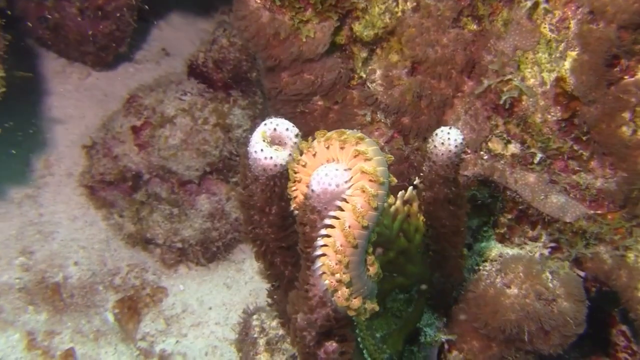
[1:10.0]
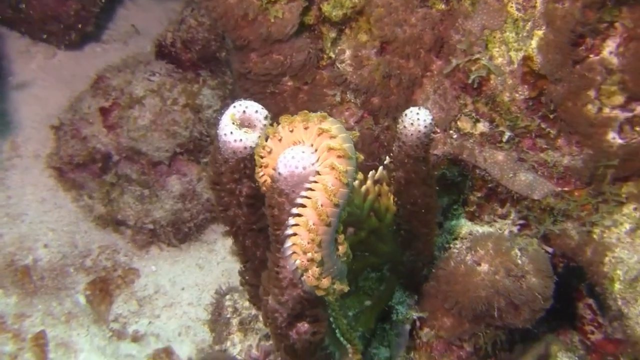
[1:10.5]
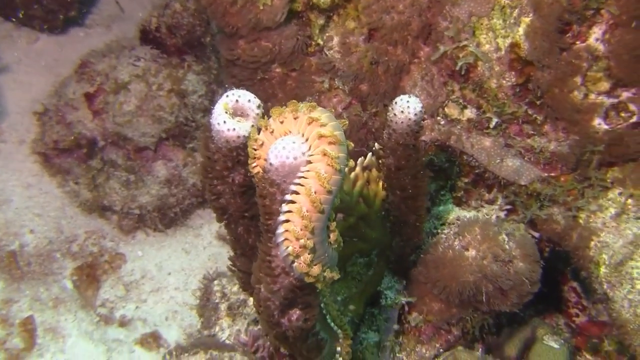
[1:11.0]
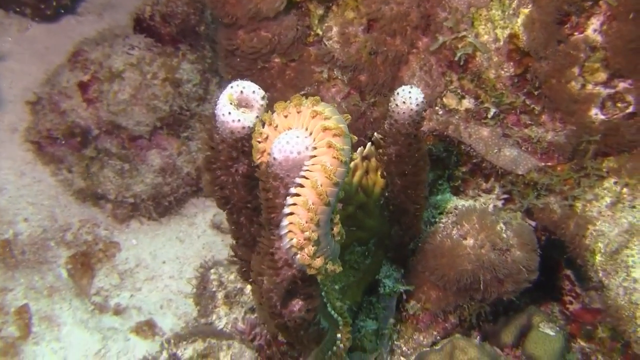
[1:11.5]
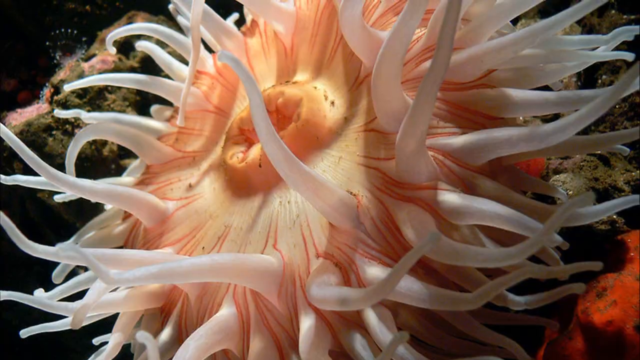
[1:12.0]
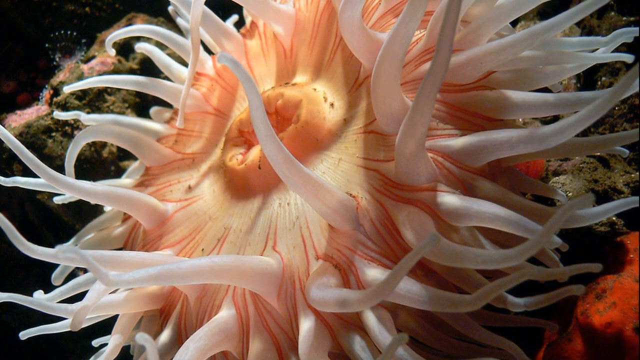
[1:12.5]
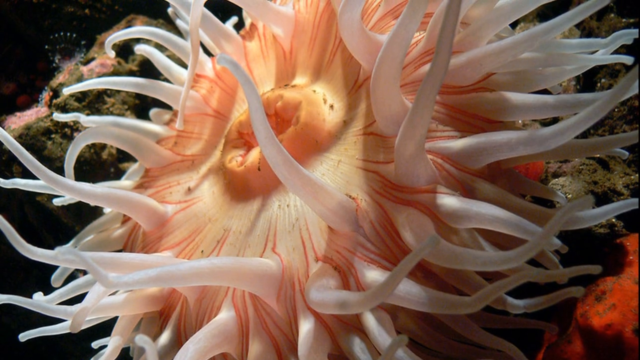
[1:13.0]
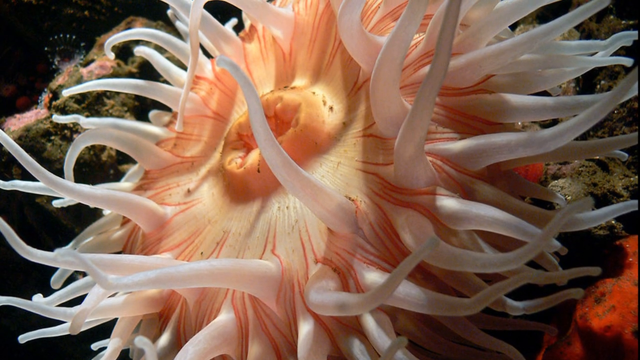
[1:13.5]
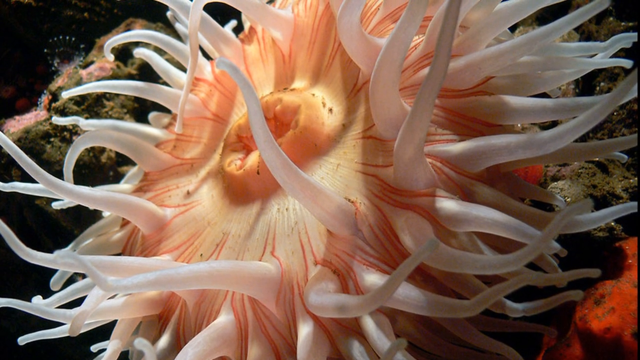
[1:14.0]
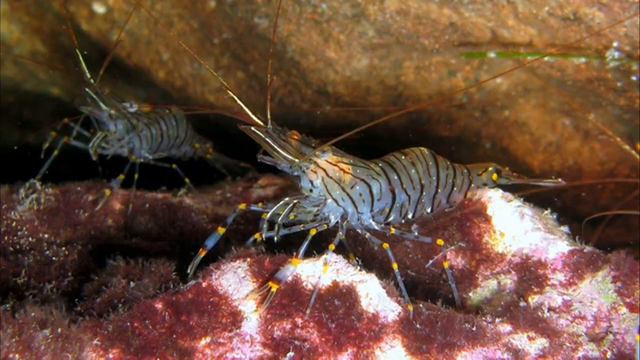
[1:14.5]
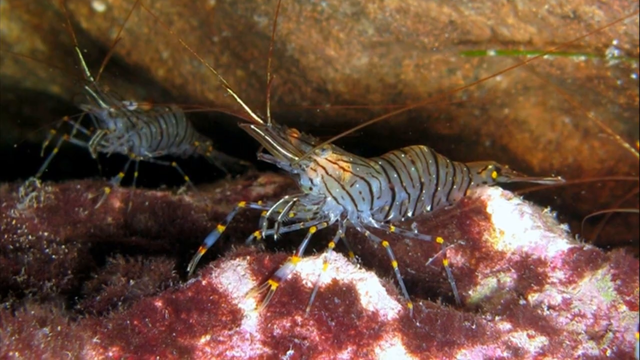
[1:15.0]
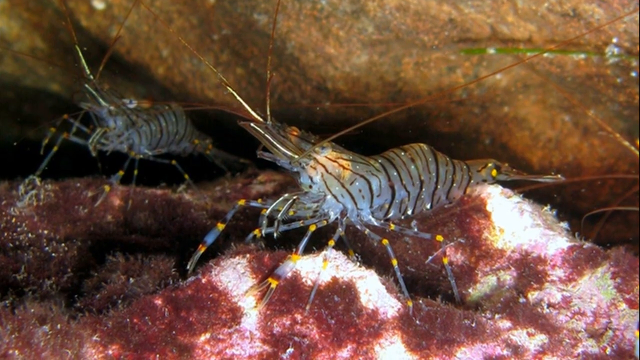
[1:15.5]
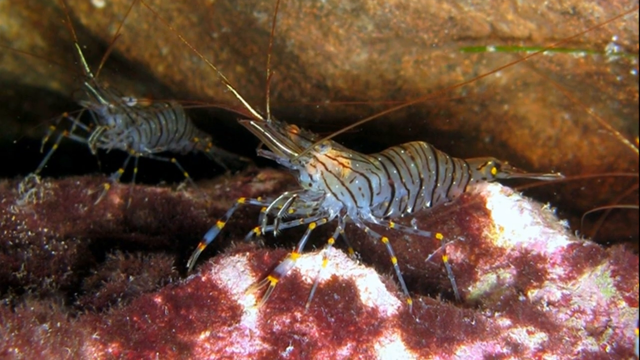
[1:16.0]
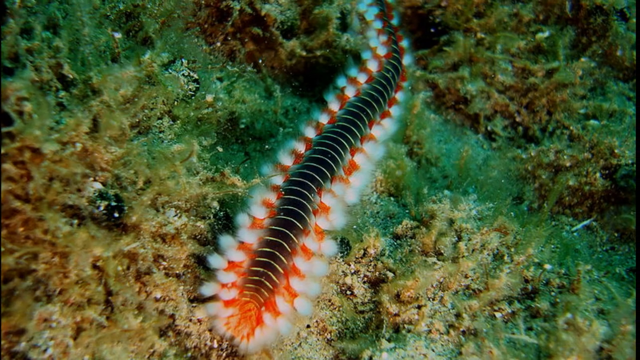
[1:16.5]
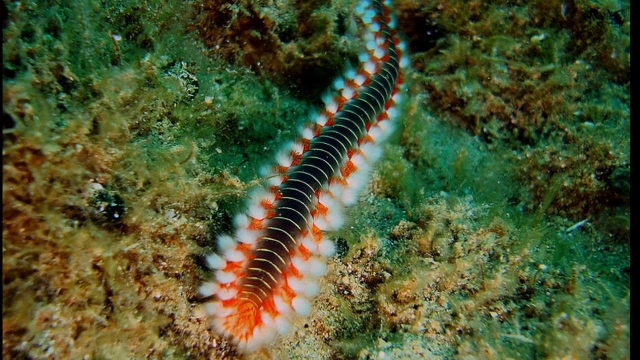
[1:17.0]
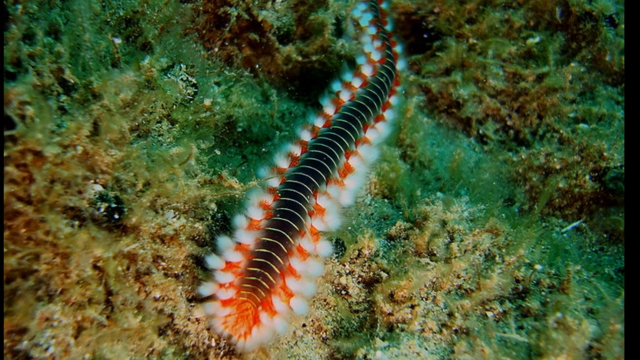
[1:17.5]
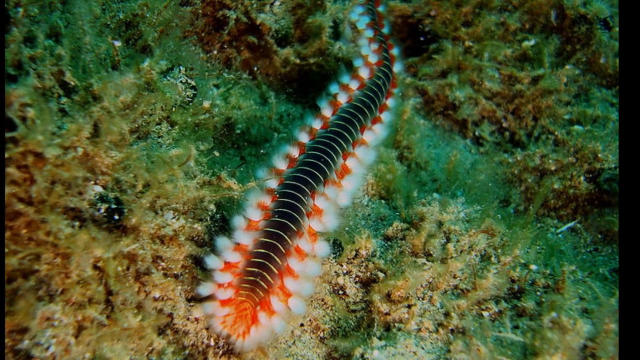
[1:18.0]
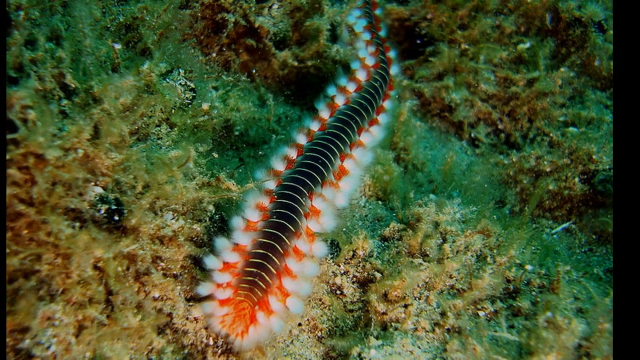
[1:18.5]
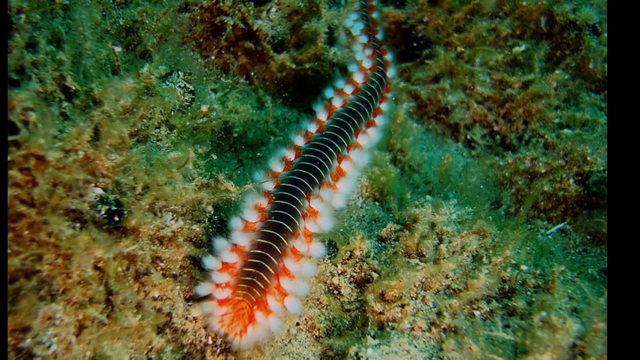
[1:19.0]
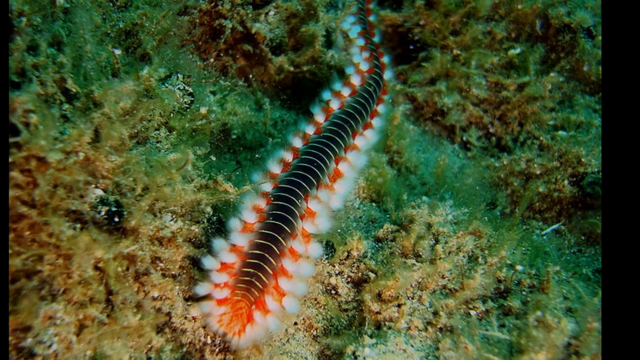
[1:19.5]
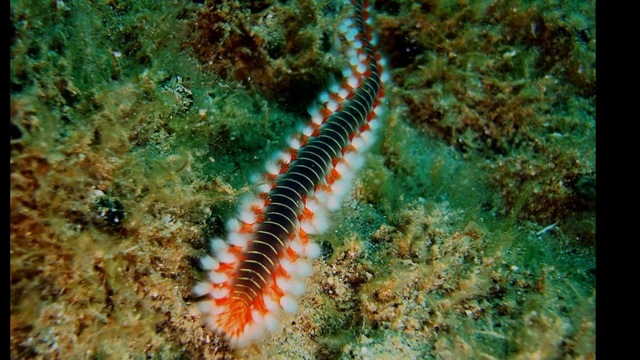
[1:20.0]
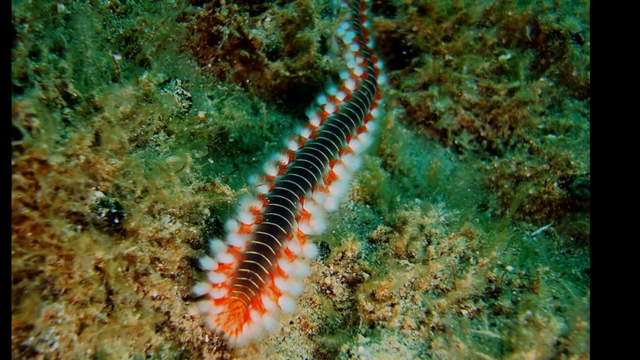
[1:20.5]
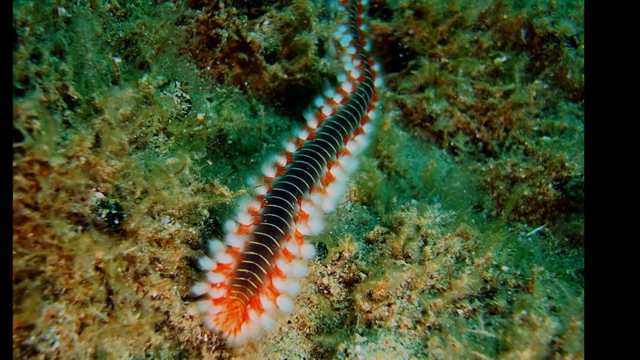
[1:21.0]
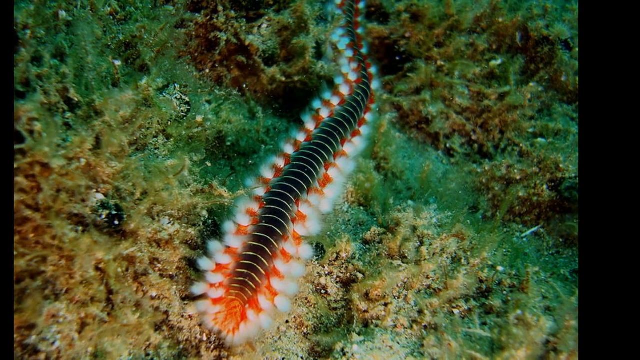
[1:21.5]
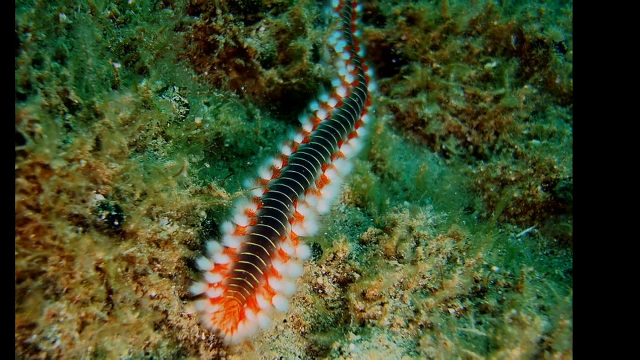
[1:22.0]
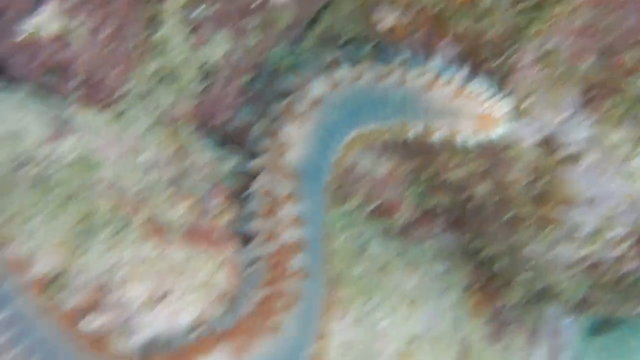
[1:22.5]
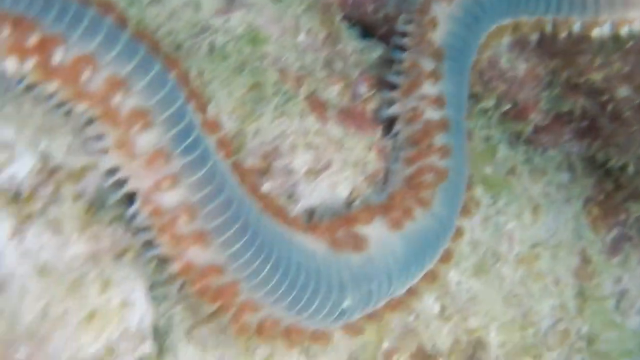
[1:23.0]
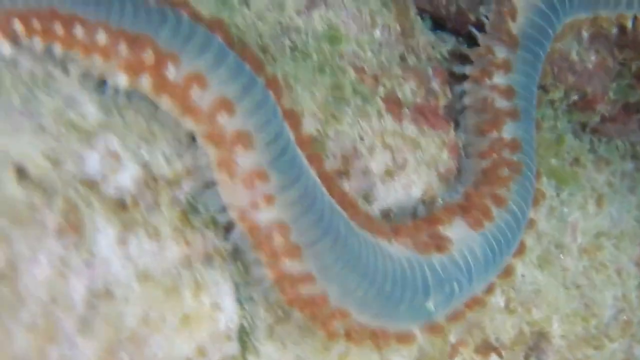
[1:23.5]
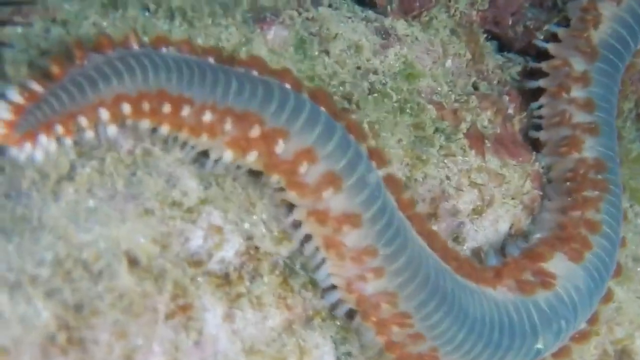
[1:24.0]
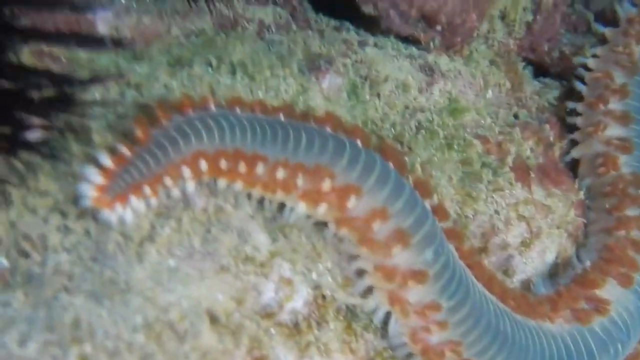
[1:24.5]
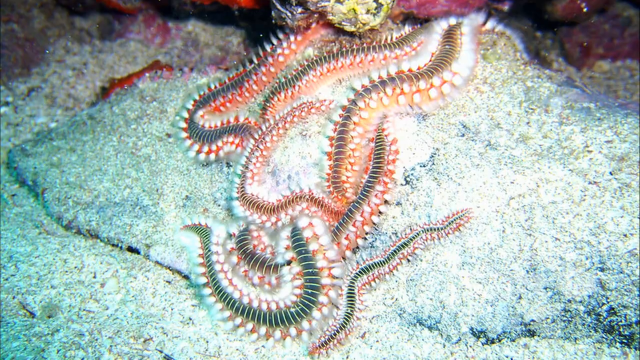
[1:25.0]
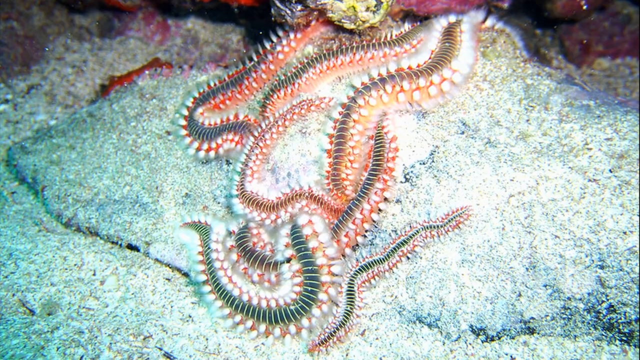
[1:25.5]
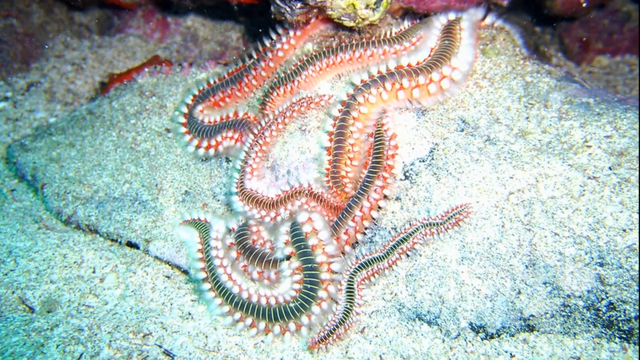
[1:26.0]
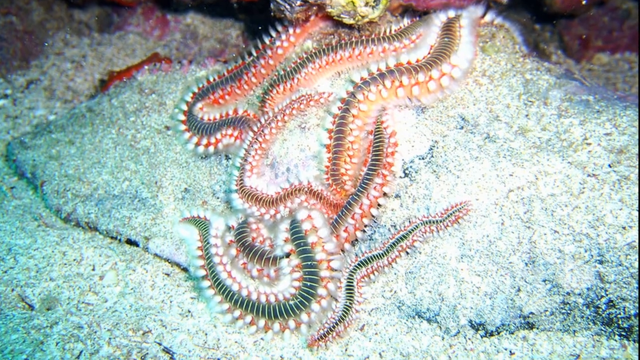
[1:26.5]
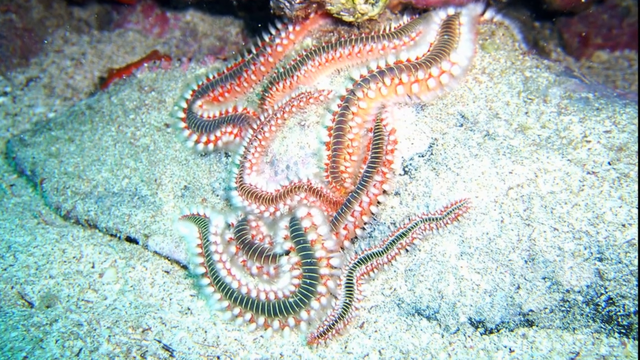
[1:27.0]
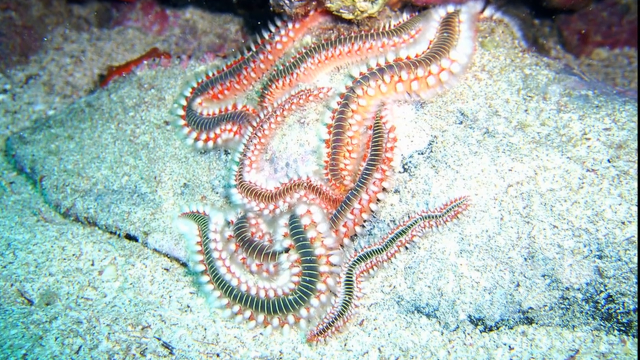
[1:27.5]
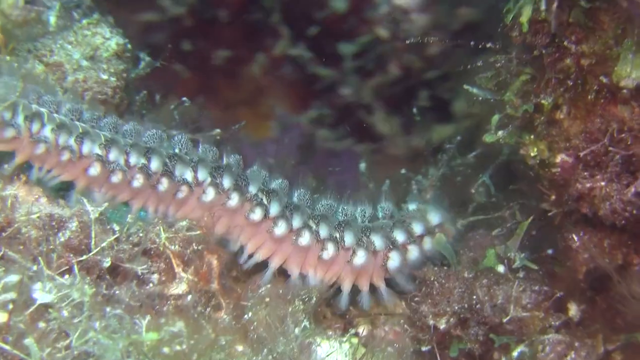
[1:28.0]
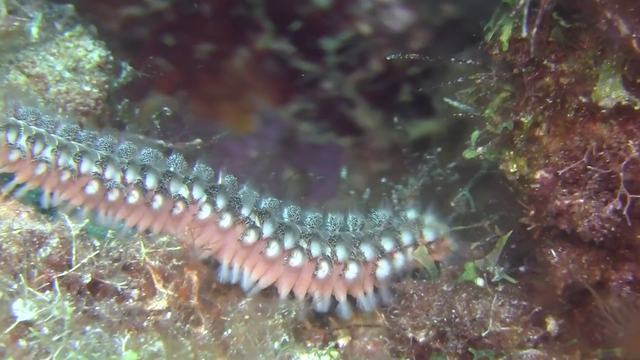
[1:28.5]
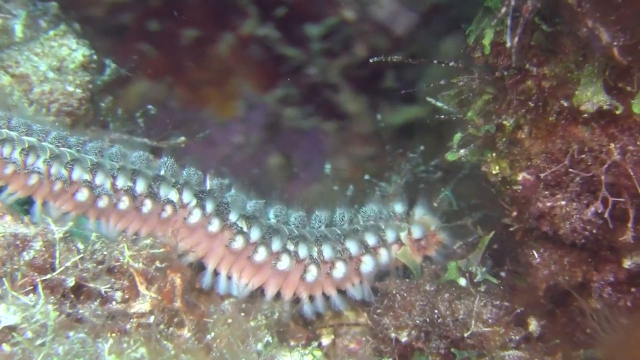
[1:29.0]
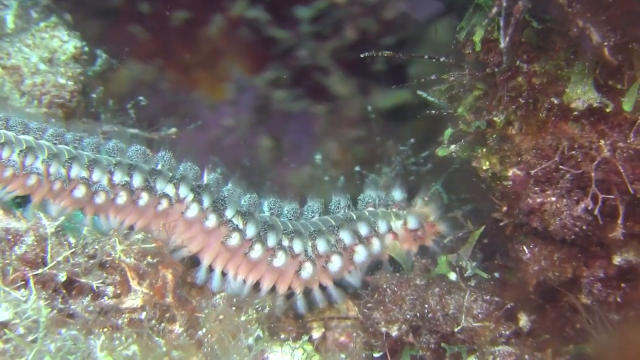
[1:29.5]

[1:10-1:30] Footage similar to earlier shows the centipede creature underwater, wrapped around a tall vertical piece of coral and crawling. It cuts to what looks like an up-close view of possibly a different kind of creature in the center: there is a hole with wild legs sticking out around it; the center part, the hole, is orange, and the legs are white. Next, what look like two crustacean-like creatures are underwater, one in the foreground and one in the background. Both are silver and look almost like they have glitter on them, with really skinny legs with some yellow and gray on them, and some kind of whiskers sticking out. It then cuts to another image of the long centipede-like creature, this time with a black center and orange legs; the little ends of the legs look white and look like brushes. The view then zooms out on that image.